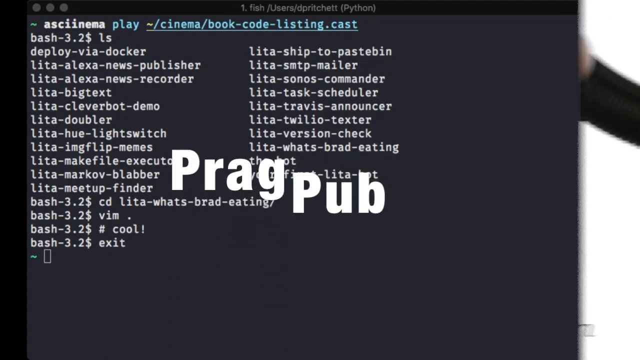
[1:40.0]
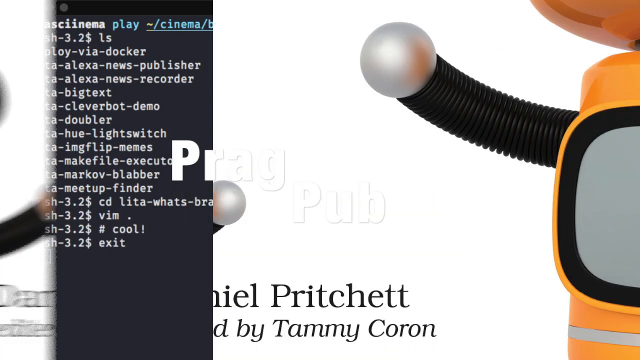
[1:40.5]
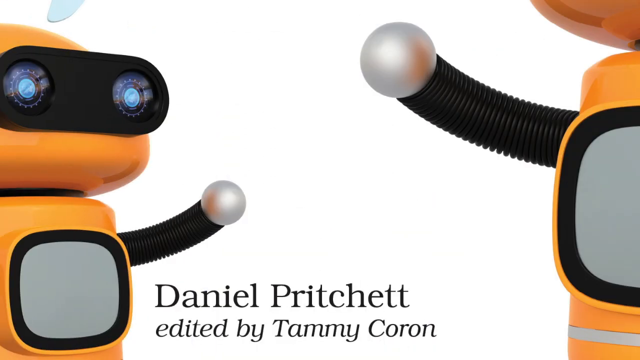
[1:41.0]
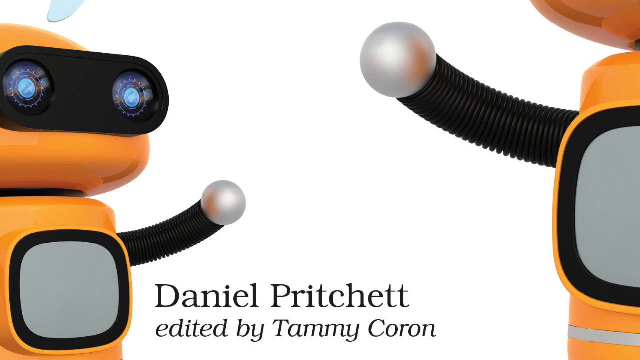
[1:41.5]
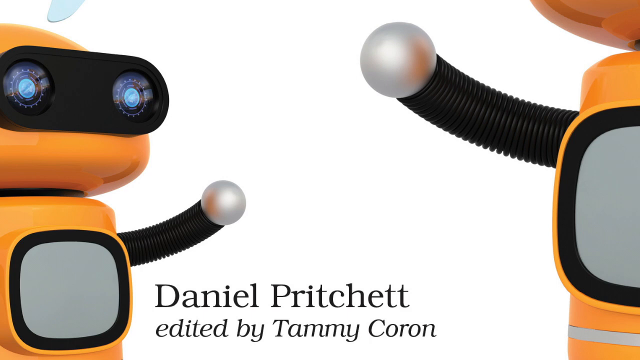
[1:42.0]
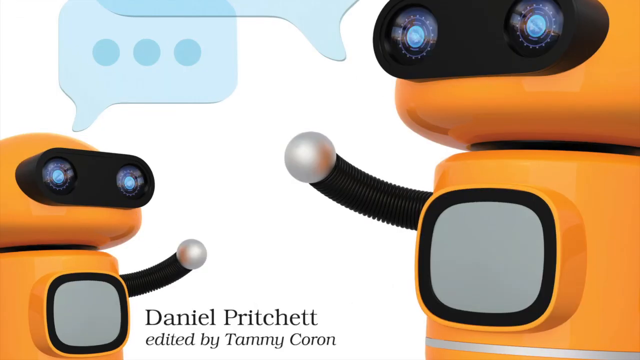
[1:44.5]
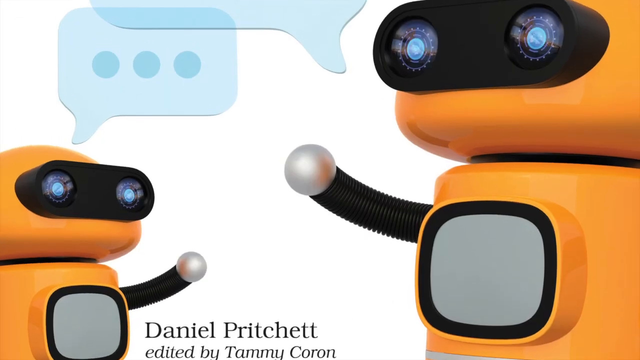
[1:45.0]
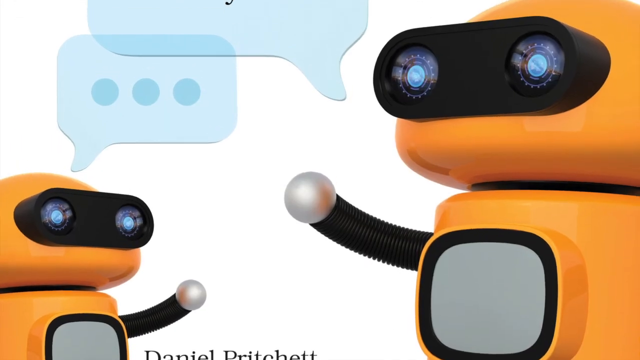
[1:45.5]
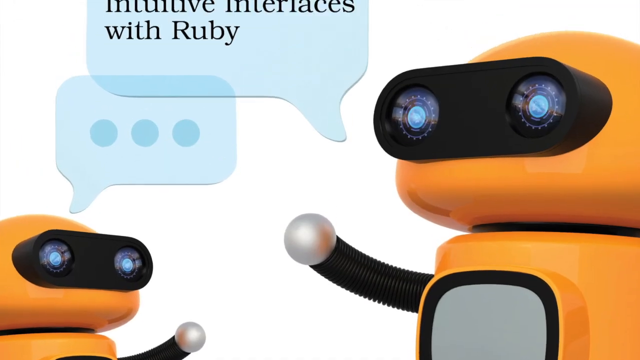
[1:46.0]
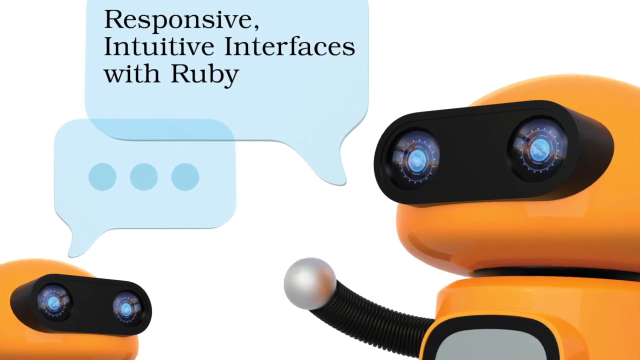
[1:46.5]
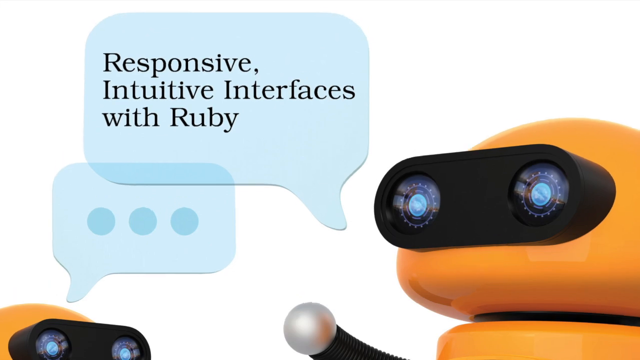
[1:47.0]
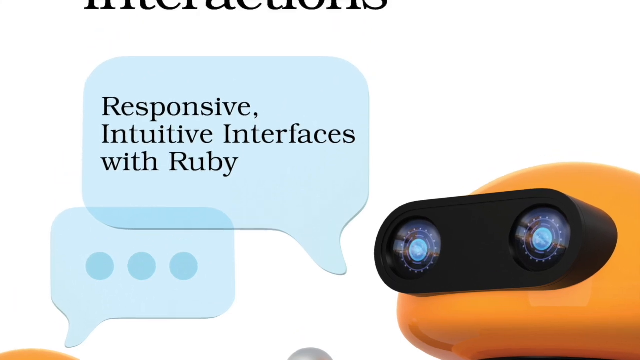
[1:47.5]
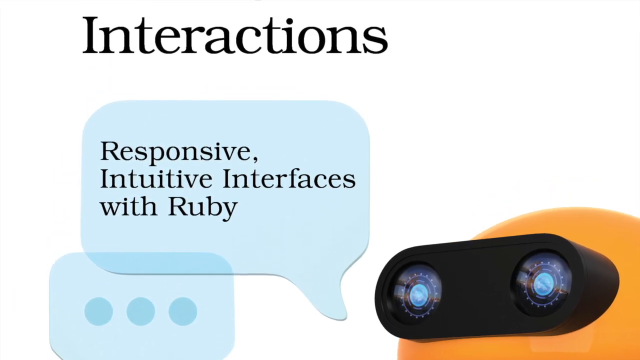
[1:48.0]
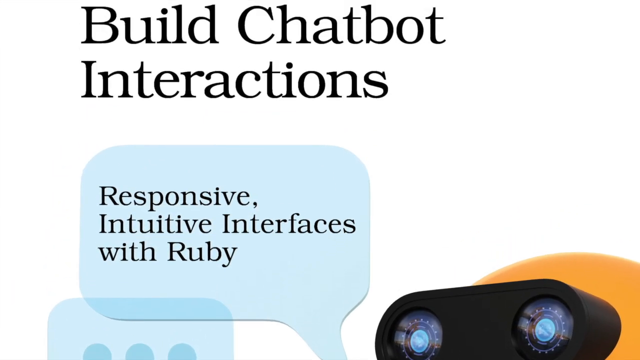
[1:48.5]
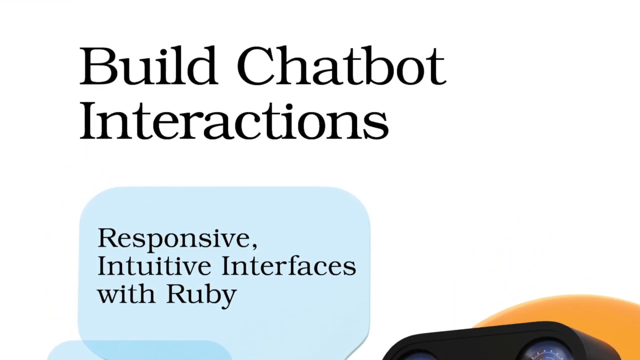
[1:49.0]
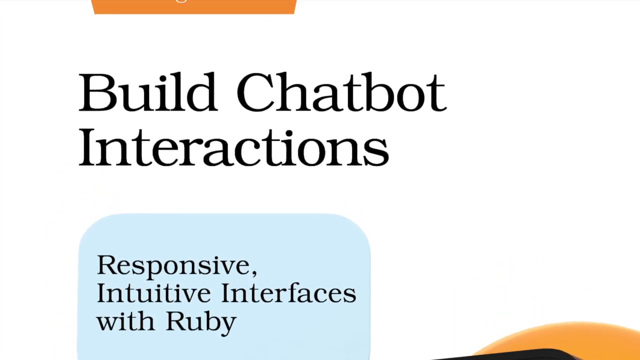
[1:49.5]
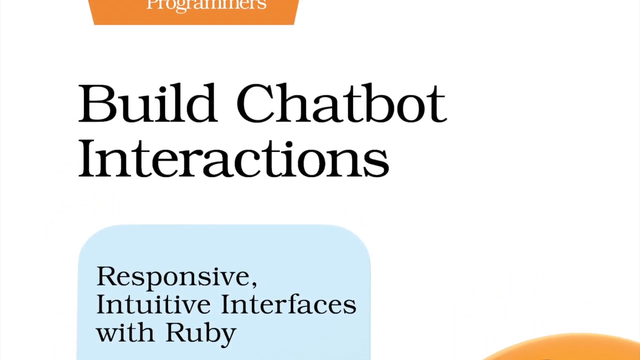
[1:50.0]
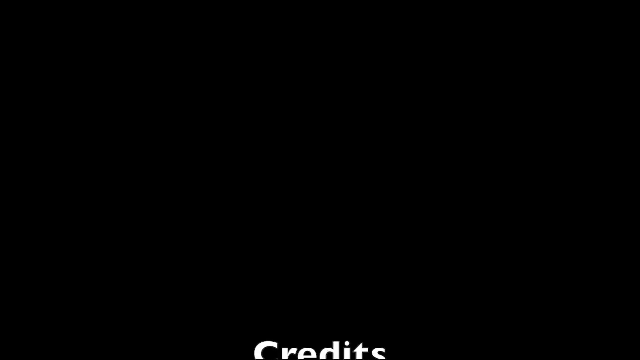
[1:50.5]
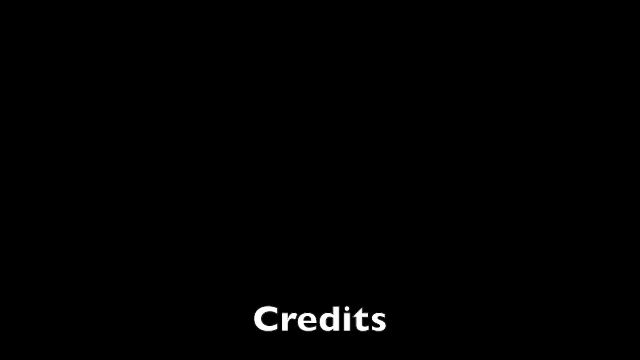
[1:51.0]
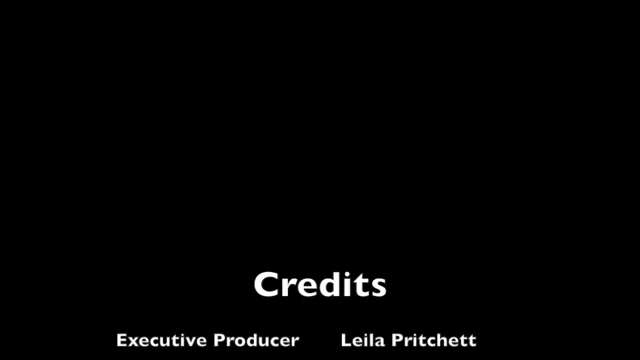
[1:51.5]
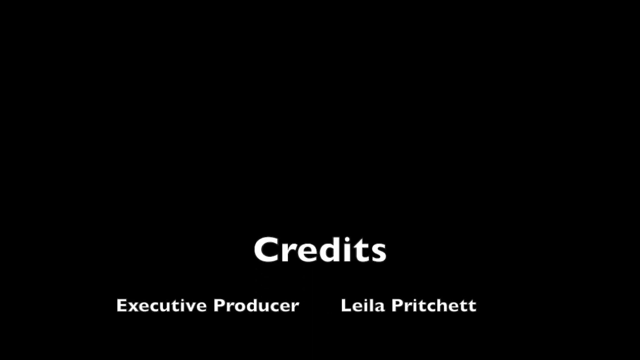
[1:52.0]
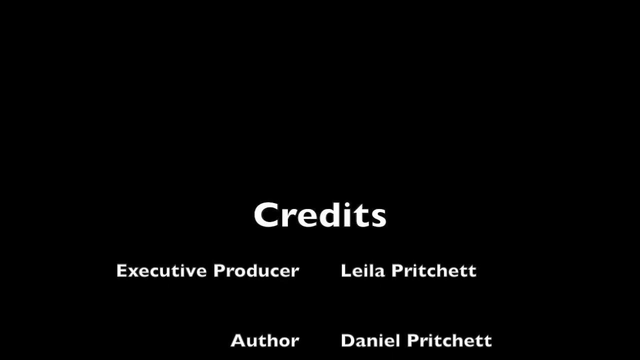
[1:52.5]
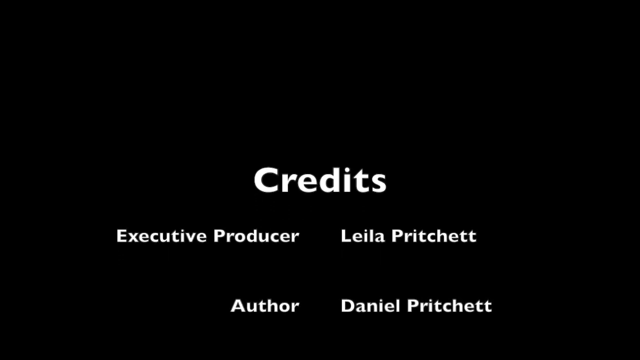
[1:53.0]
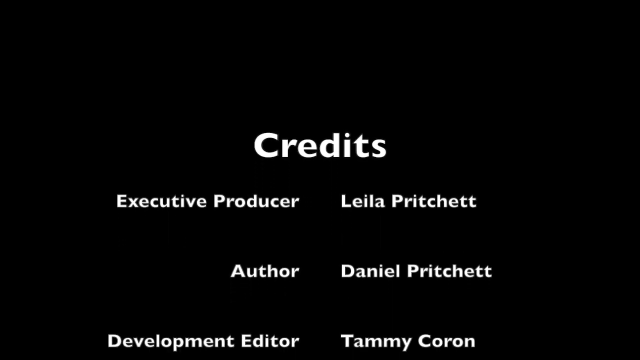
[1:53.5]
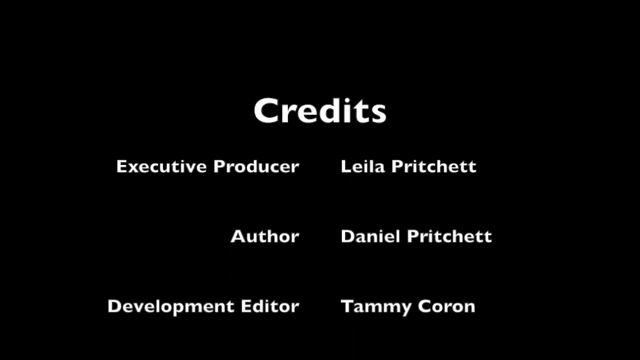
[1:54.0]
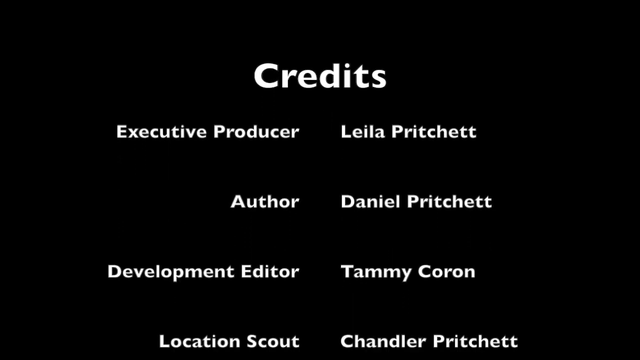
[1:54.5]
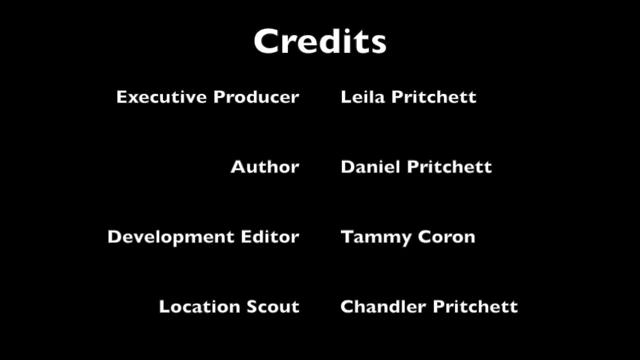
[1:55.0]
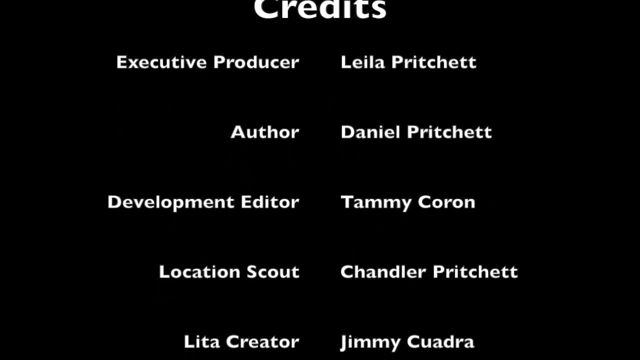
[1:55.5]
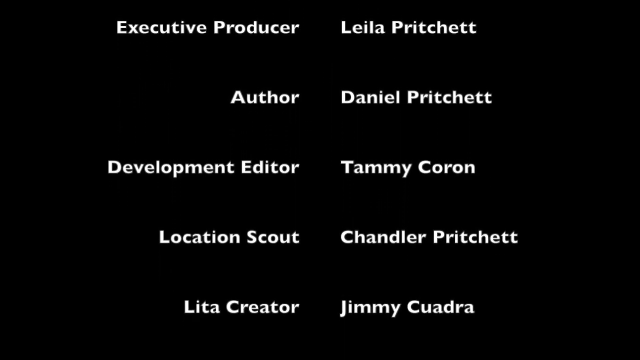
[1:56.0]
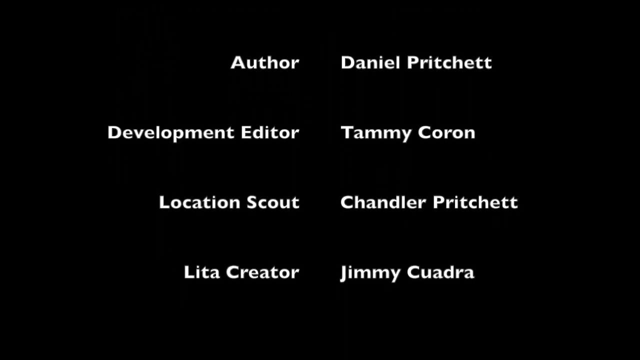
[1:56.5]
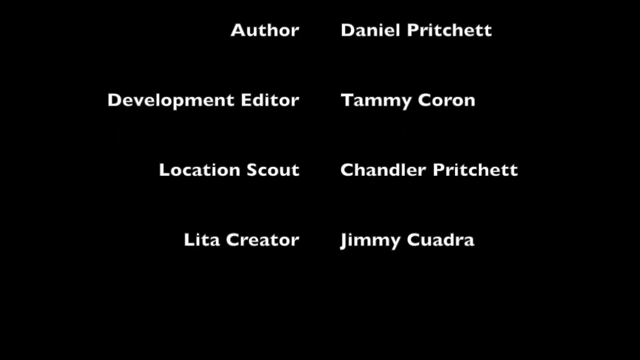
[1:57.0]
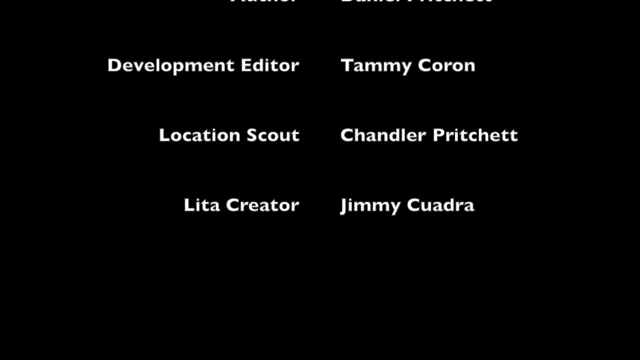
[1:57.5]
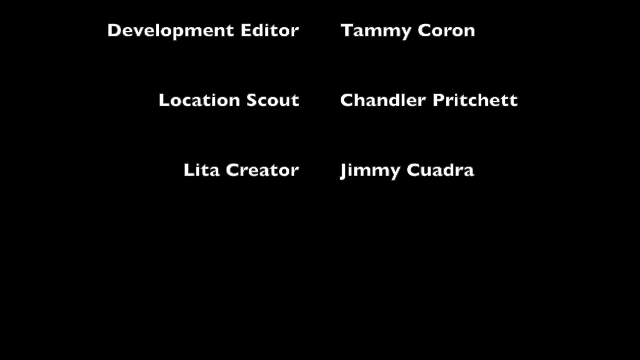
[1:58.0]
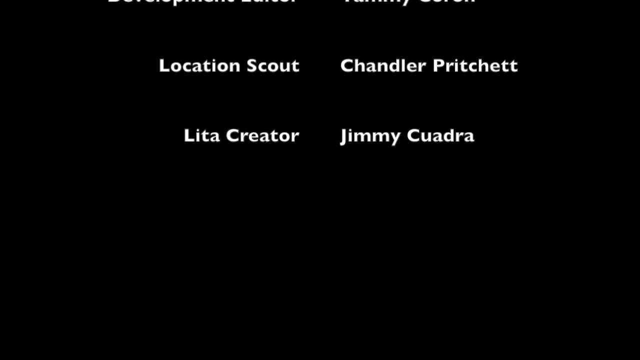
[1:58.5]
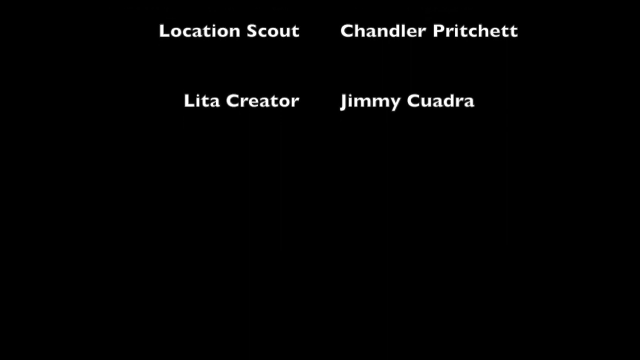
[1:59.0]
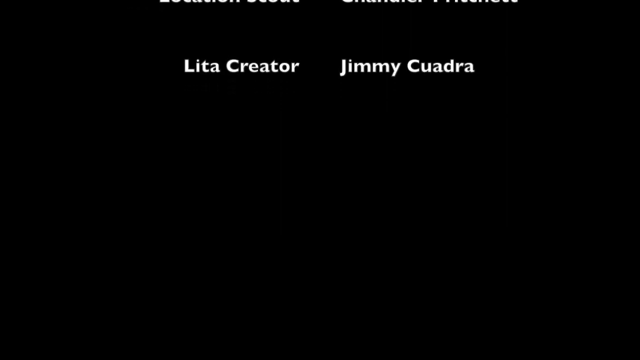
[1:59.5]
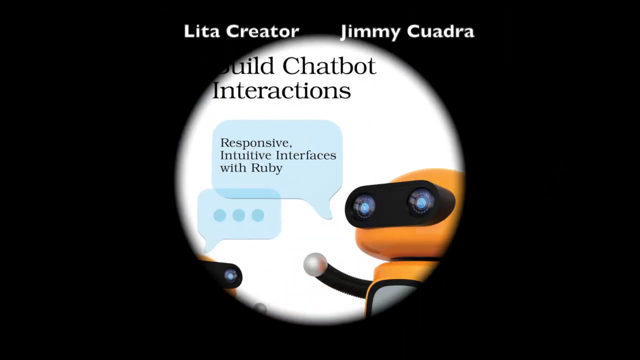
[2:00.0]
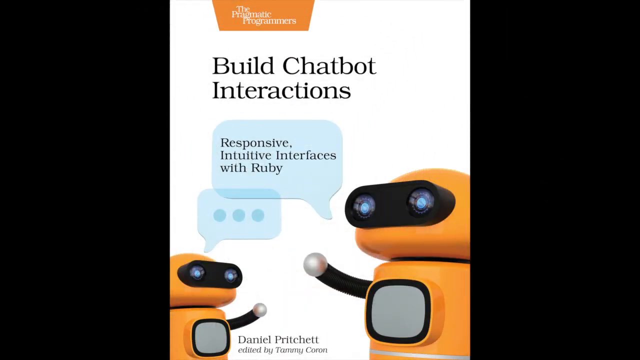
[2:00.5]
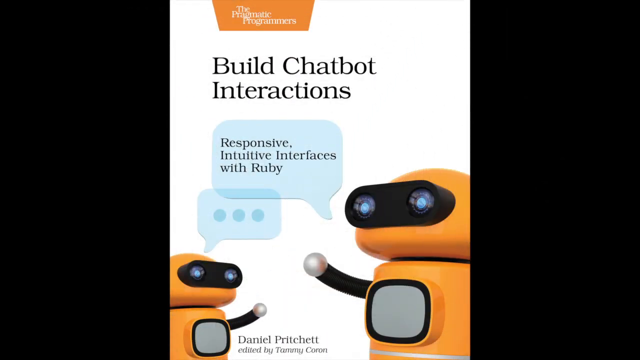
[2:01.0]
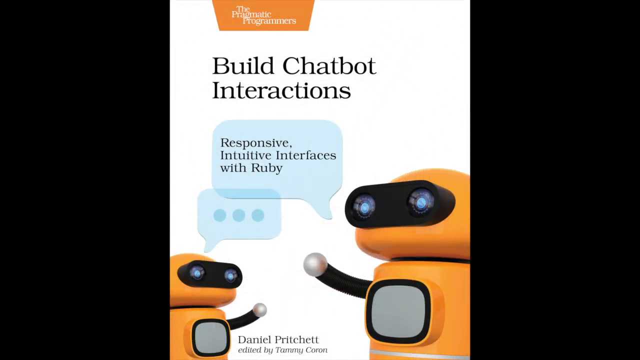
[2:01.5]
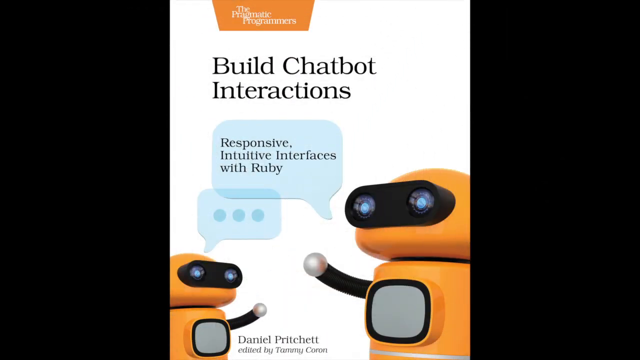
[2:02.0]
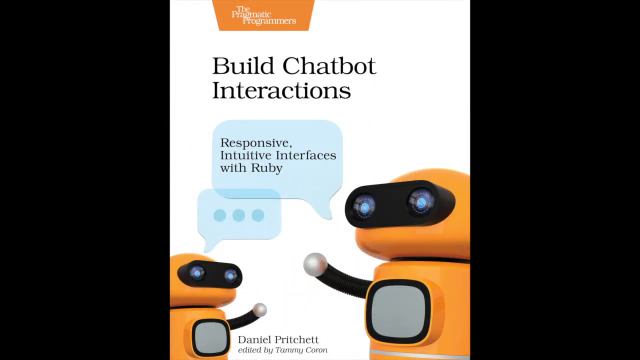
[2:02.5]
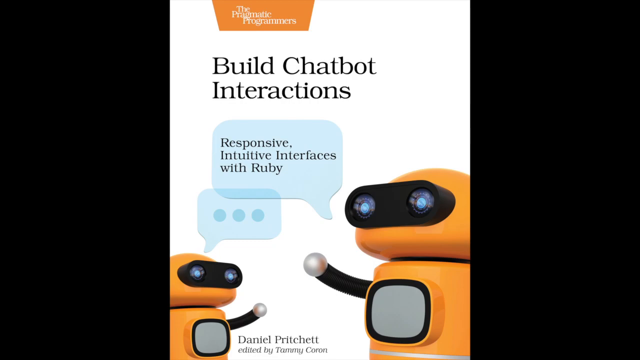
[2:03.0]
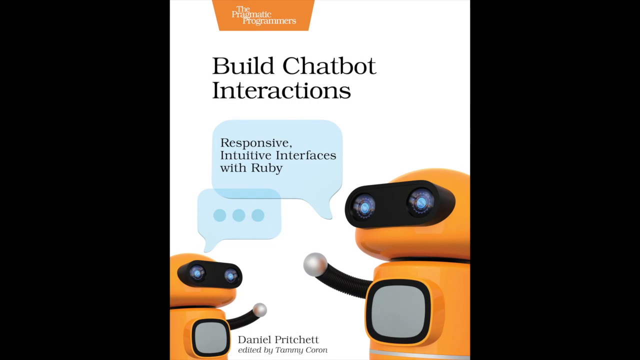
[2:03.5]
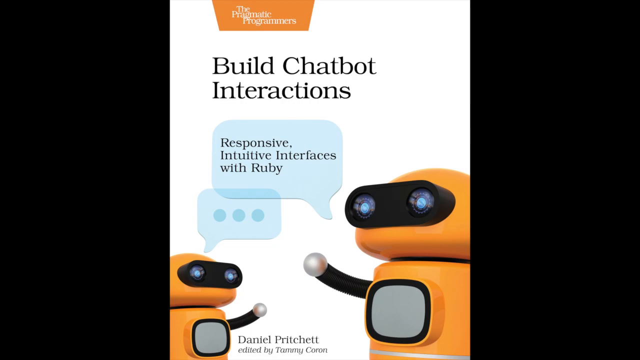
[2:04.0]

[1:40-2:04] A page of code appears with the words "Prag Pub" superimposed over it. It closes out, from left to right, to a white page with text and two orange figures, either chatbots or robots. They have sort of black goggles over their eyes, their bodies are also orange, and in their centers is a silver square with black trim, along with the words "Daniel Pritchett, edited by Tammy Caron." The video pans up to dialogue bubbles: the larger robot says "responsive intuitive interfaces with Ruby," and there is also a dialogue bubble for the smaller robot, but it is blank. The video continues to pan upward to the words "build chatbot interactions." It then transitions to a black screen with the word "credits" at the top, which pans upward to show "executive producer Leila Pritchett," "author Daniel Pritchett," "Development Editor, Tammy Coron," "Location Scout, Chandler Pritchett," and "Lita Creator, Jimmy Cuadra."